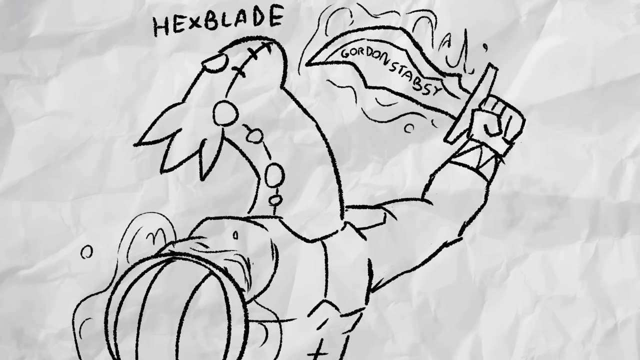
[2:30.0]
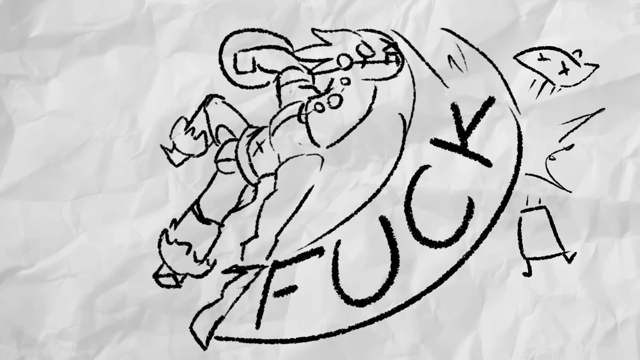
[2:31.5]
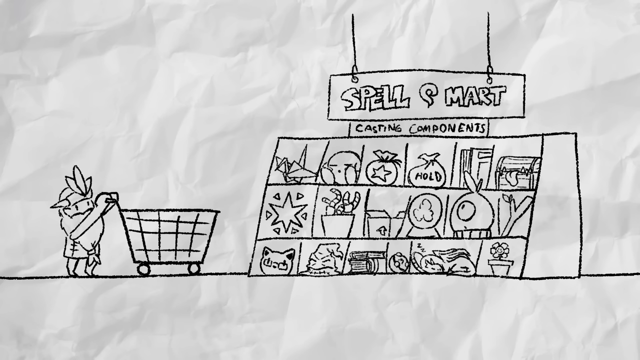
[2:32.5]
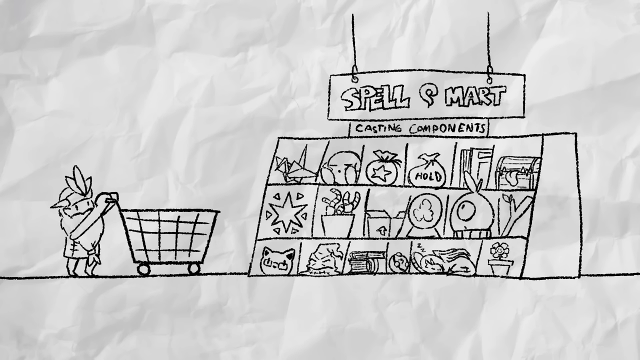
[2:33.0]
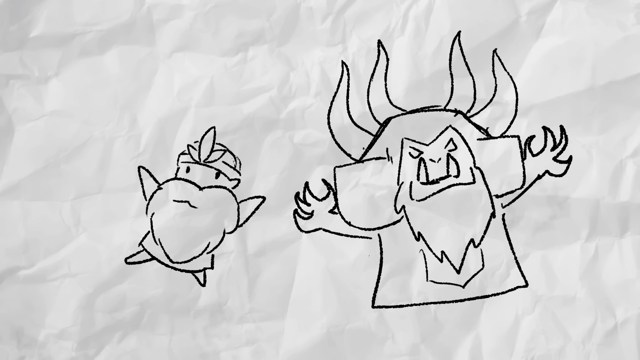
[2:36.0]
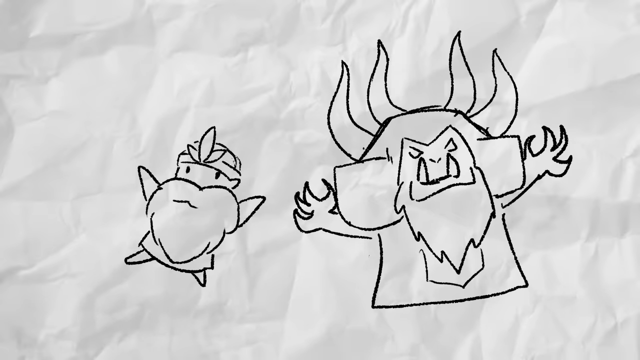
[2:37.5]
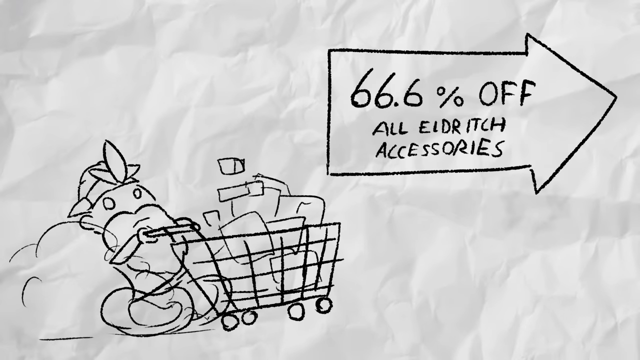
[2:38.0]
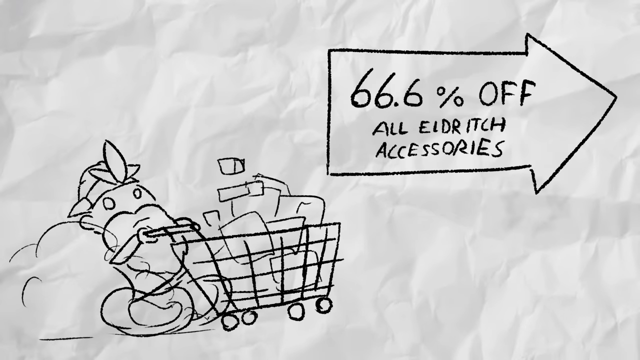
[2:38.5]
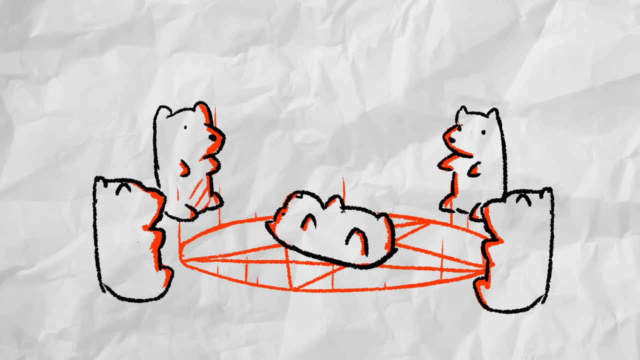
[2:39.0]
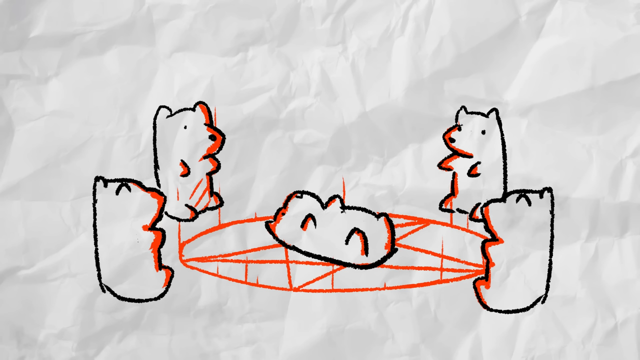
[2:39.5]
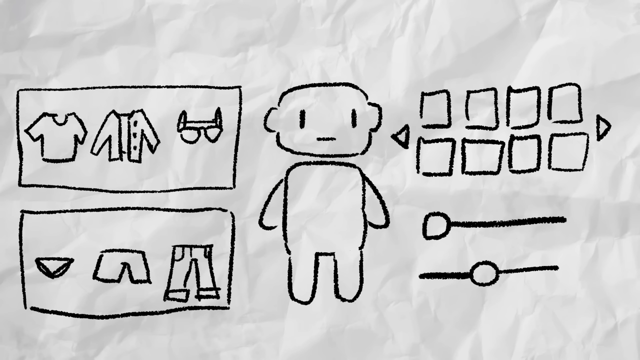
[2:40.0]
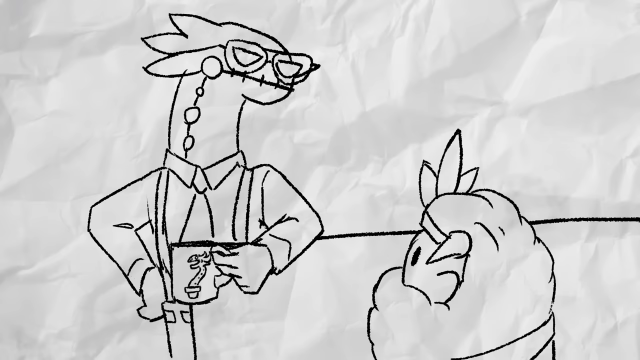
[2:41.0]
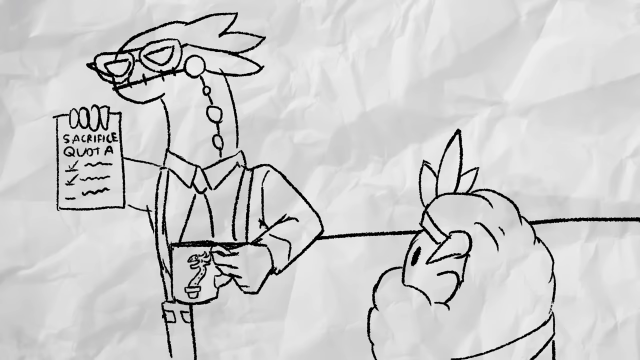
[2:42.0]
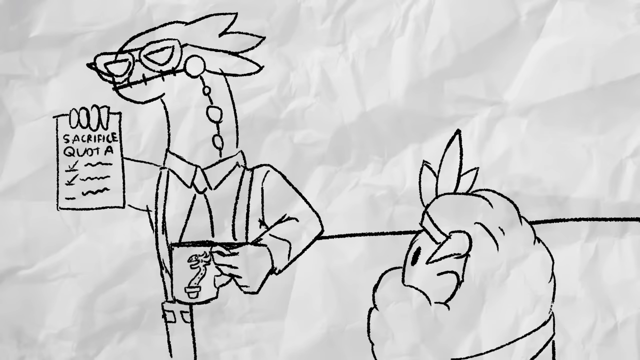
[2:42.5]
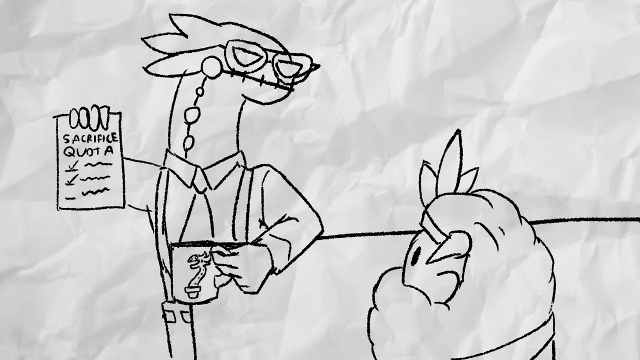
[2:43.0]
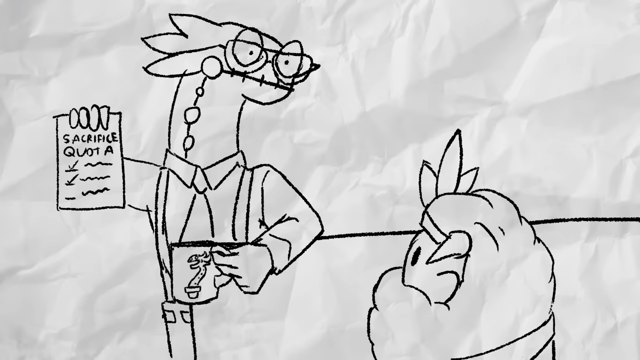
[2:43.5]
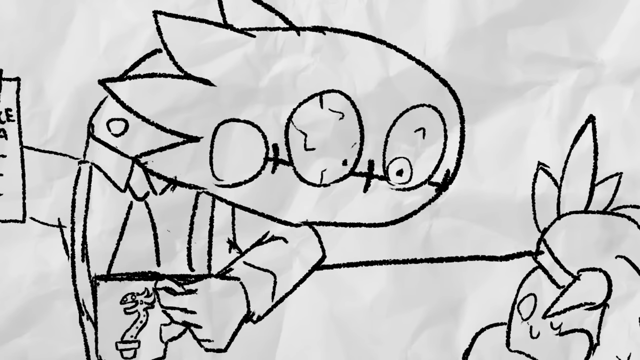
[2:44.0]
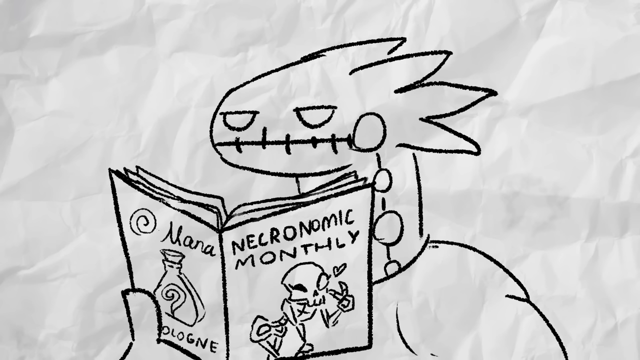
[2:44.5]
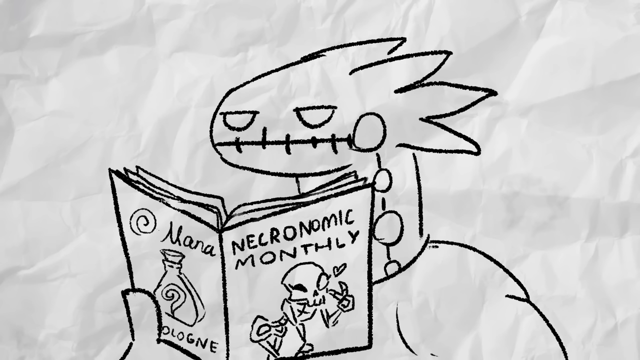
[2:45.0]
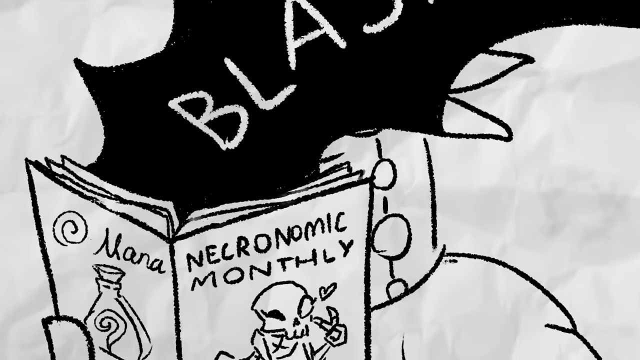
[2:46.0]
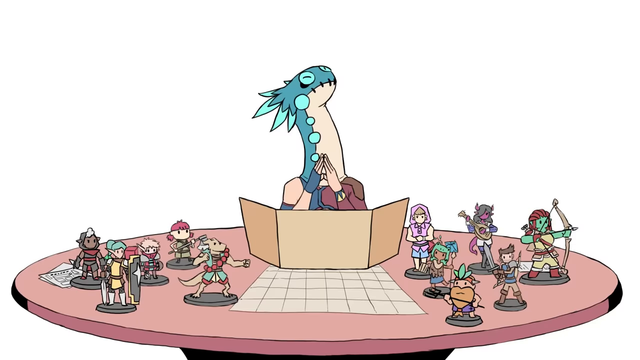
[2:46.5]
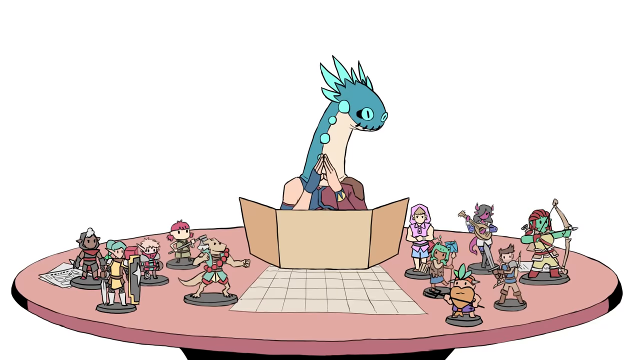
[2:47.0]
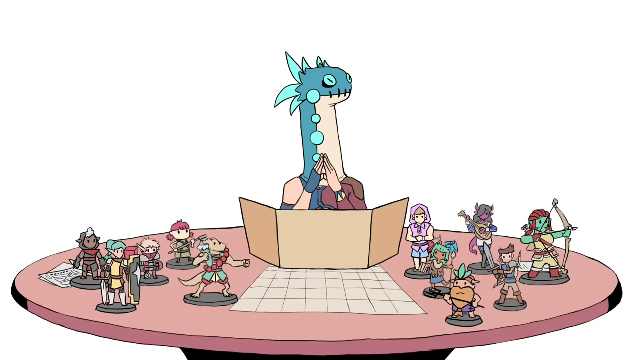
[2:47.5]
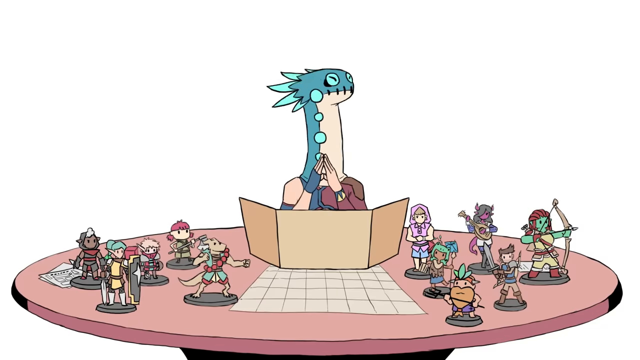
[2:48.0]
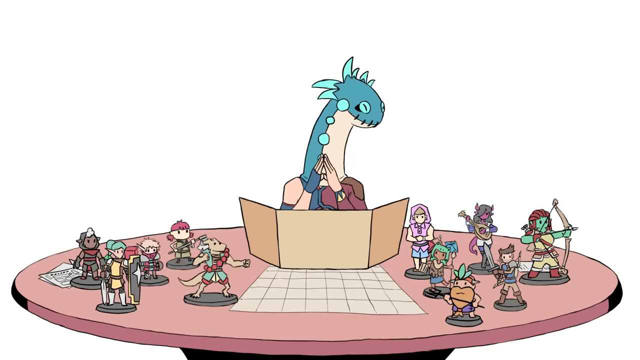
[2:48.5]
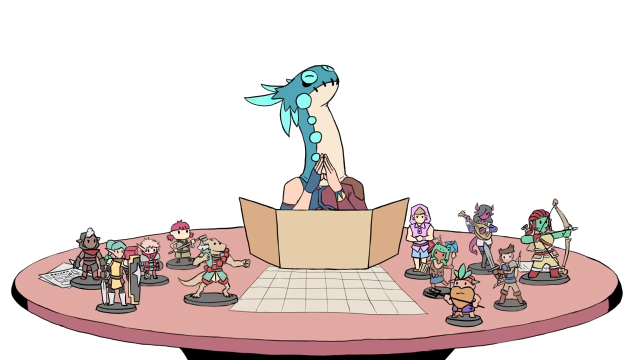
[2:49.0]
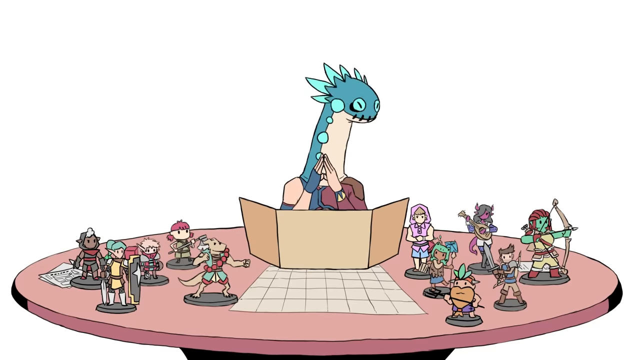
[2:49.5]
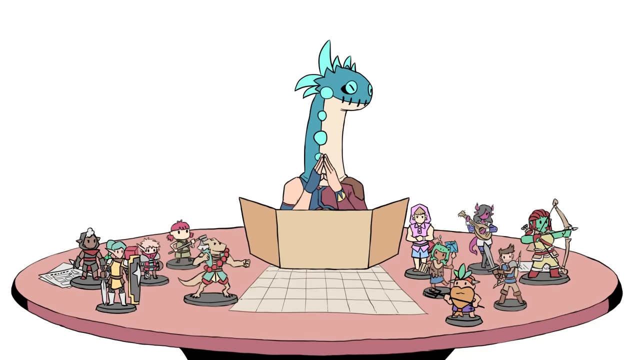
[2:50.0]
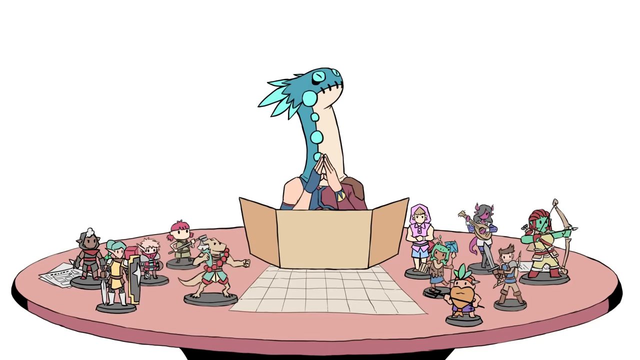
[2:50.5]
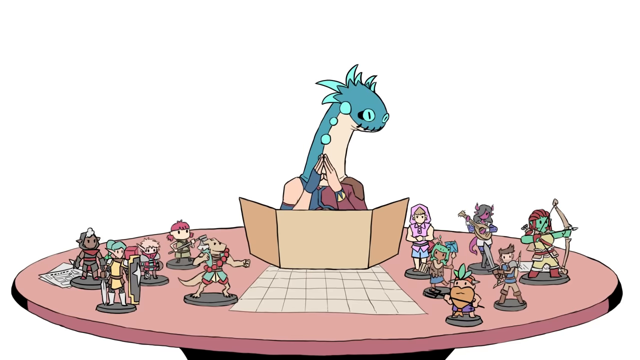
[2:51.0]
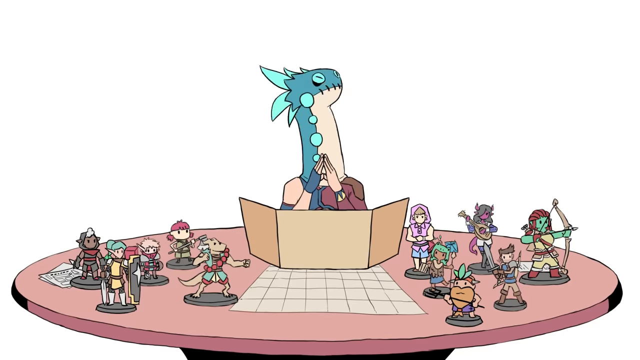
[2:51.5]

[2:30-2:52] The scenario continues hand-drawn on a crumpled piece of white paper. It starts with a hand-drawn monster named Hexblade, who has a sword with the name "Gordon Stabsy" on it. He slices one person, and the scene moves to the spell mart, where the character looks to purchase other spells and is shown the deals he can get on certain spells from a person selling them. It shows where the spells come from and how to use them in the game. The video ends with the logo for the Dungeons and Dragons game.